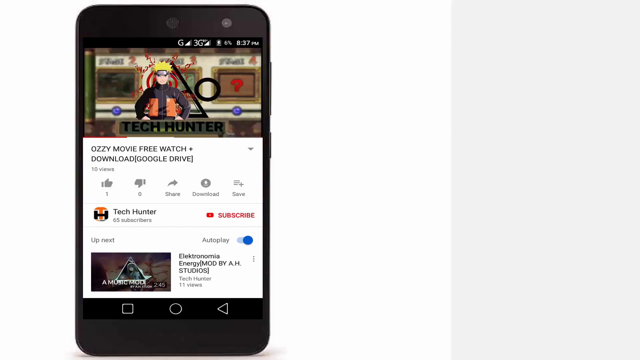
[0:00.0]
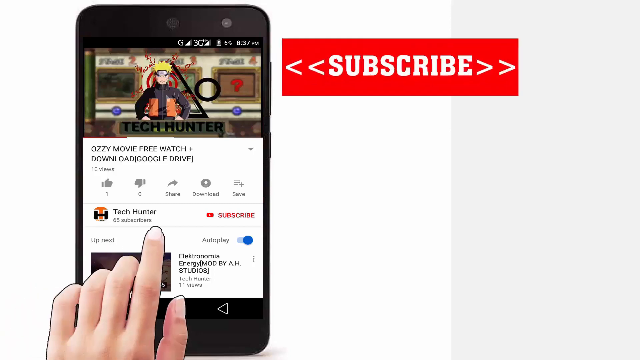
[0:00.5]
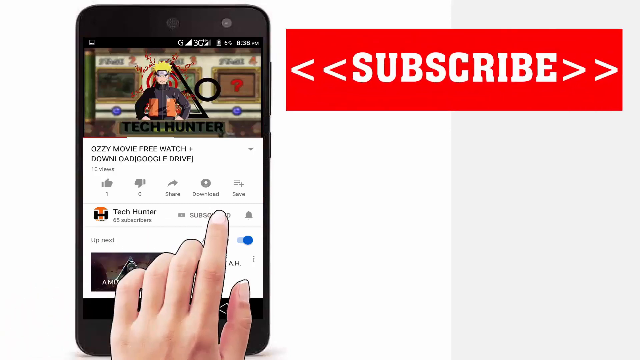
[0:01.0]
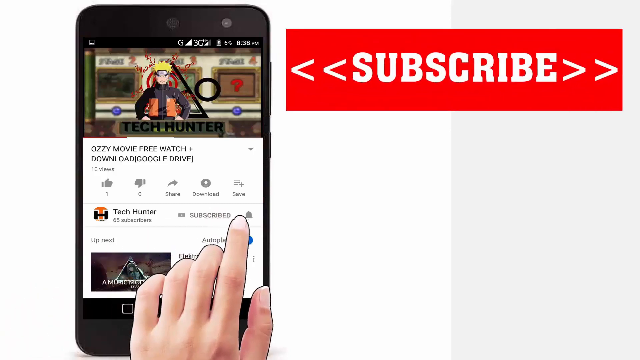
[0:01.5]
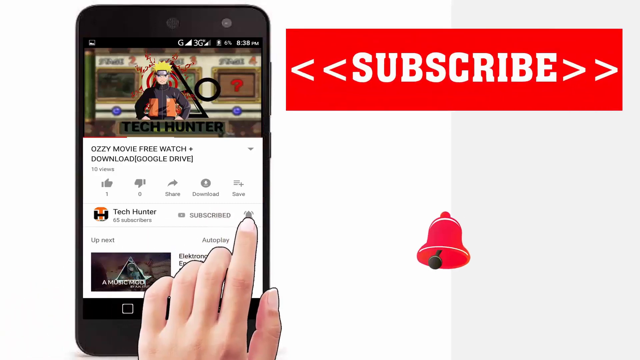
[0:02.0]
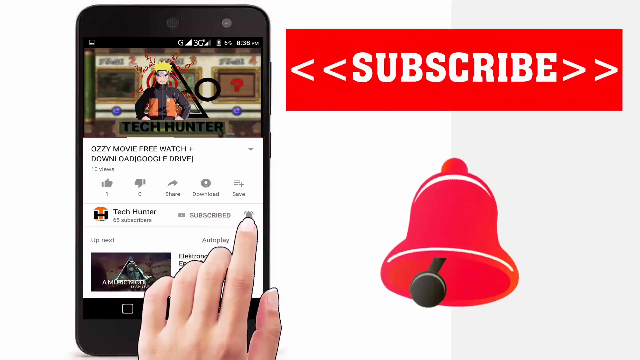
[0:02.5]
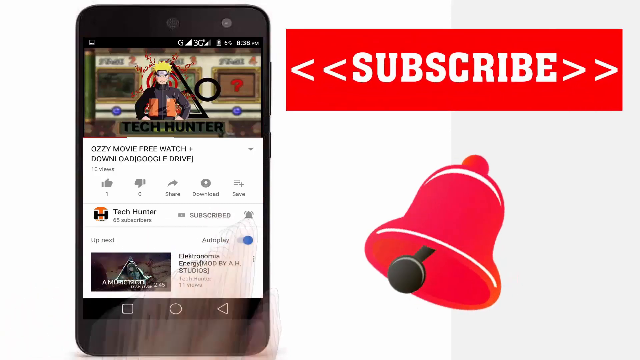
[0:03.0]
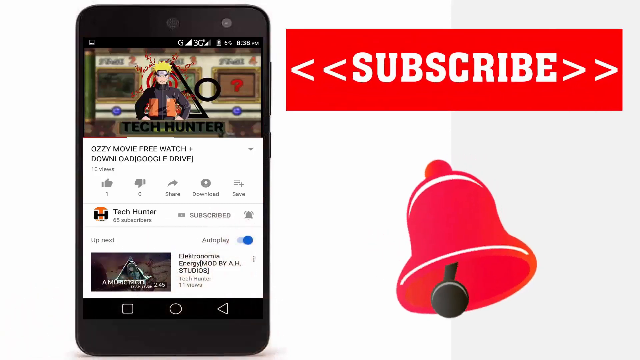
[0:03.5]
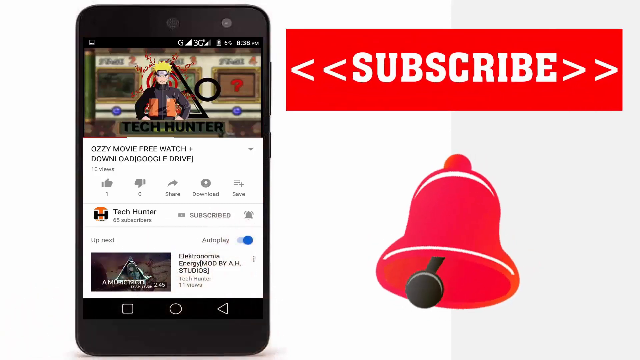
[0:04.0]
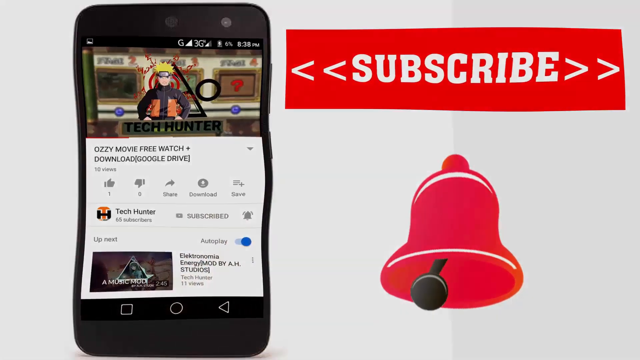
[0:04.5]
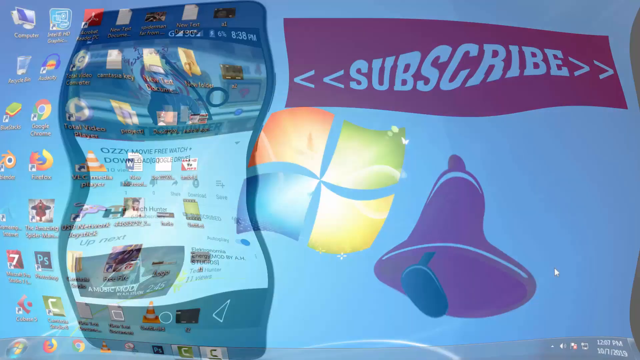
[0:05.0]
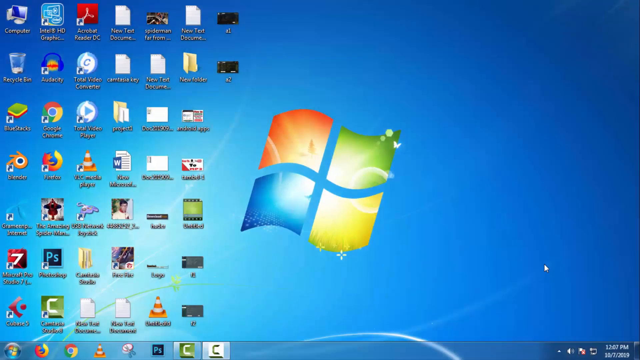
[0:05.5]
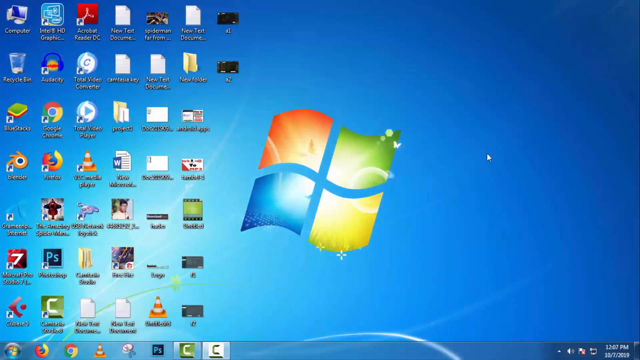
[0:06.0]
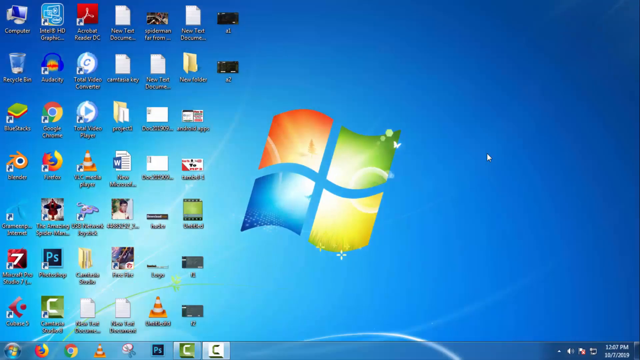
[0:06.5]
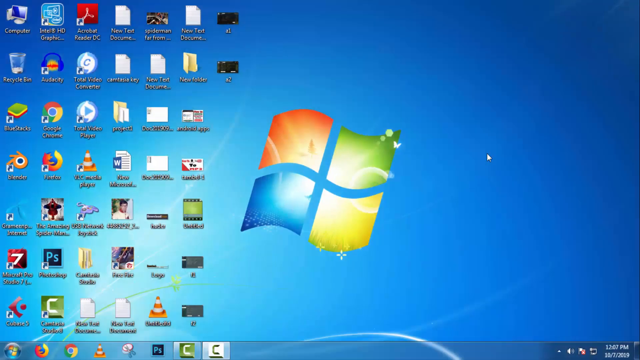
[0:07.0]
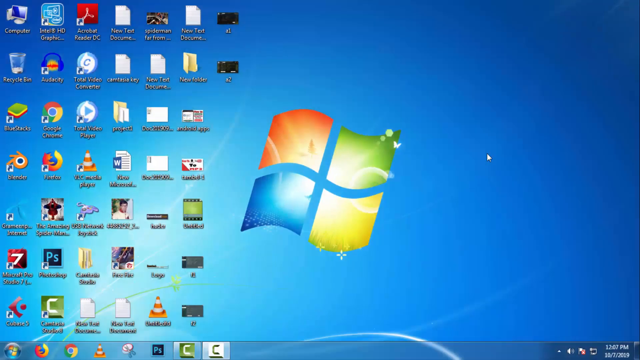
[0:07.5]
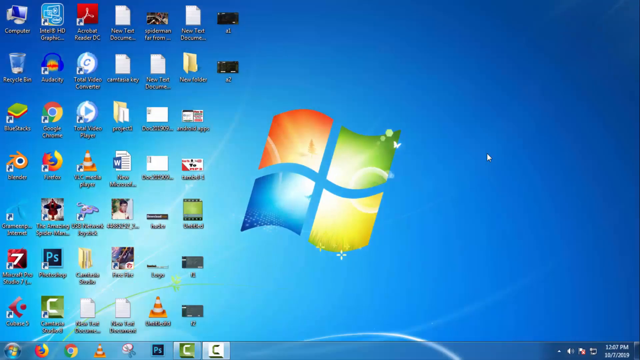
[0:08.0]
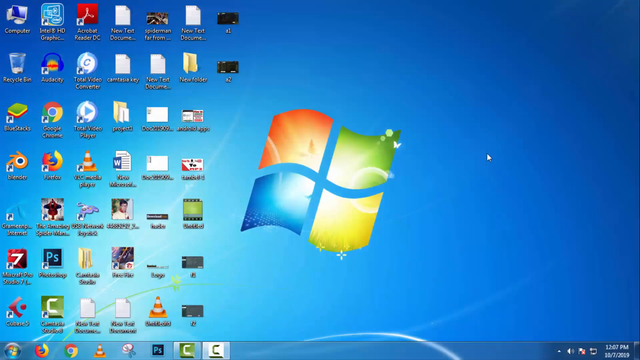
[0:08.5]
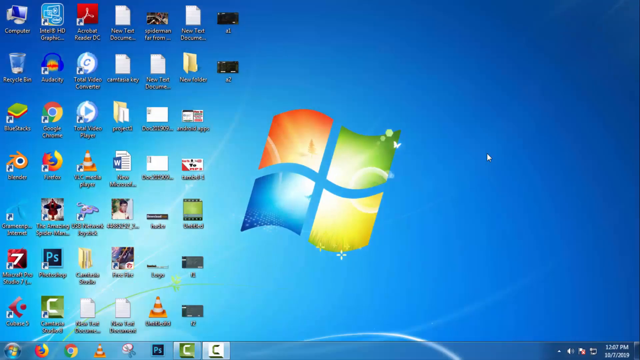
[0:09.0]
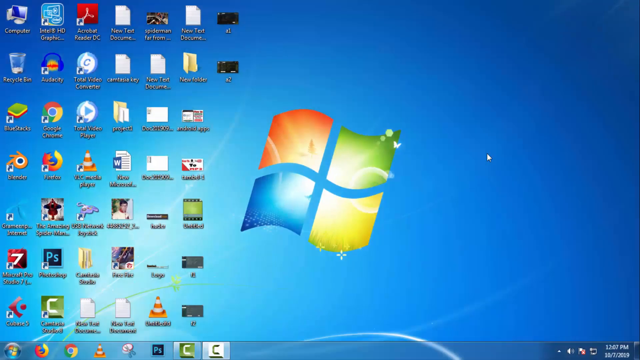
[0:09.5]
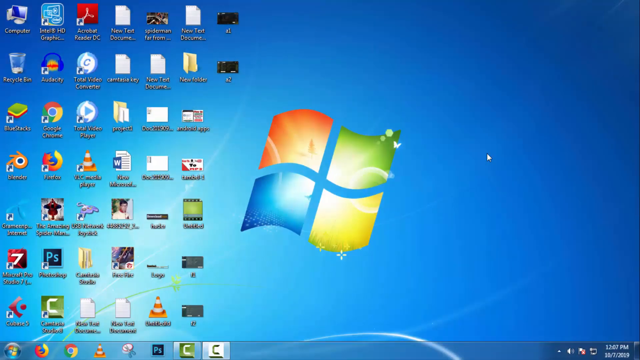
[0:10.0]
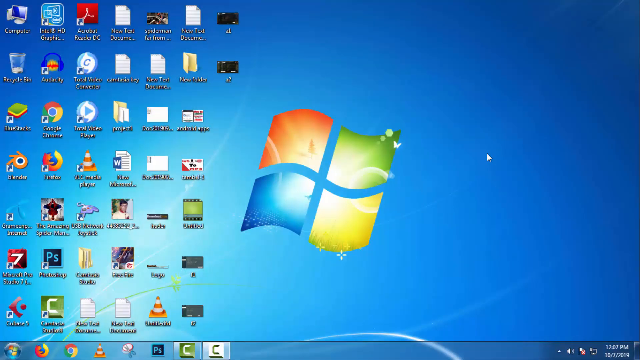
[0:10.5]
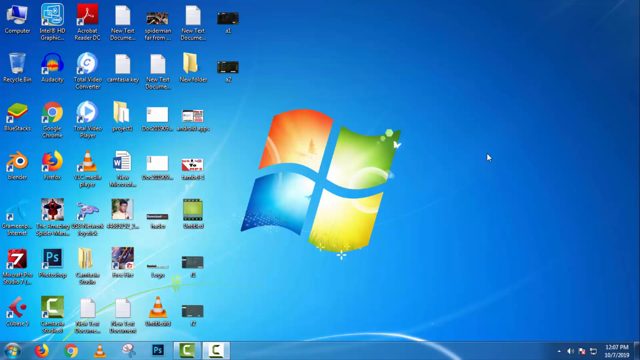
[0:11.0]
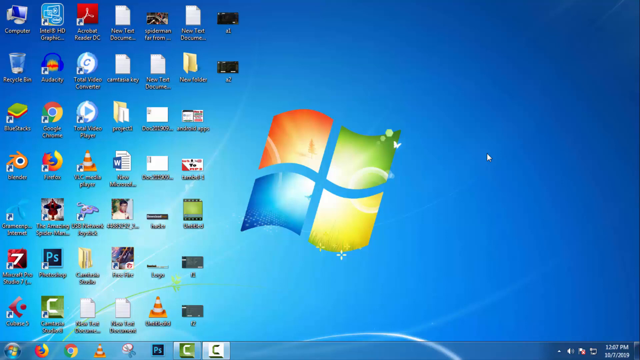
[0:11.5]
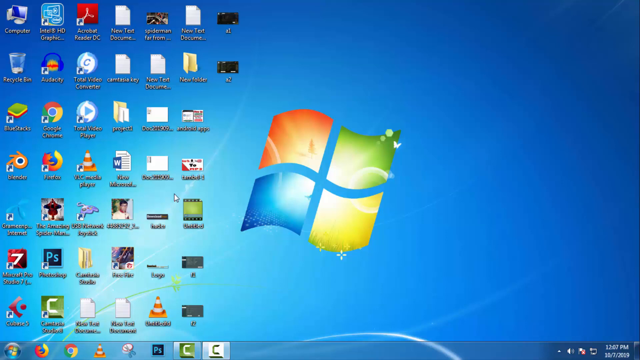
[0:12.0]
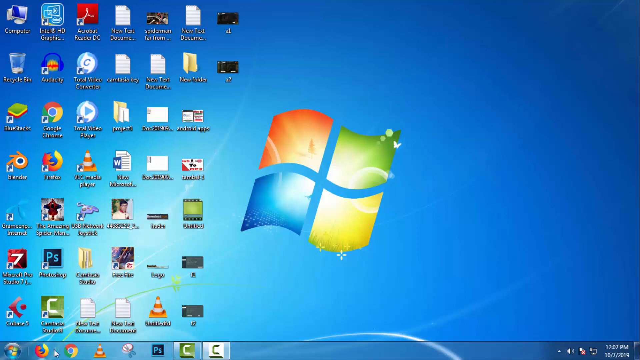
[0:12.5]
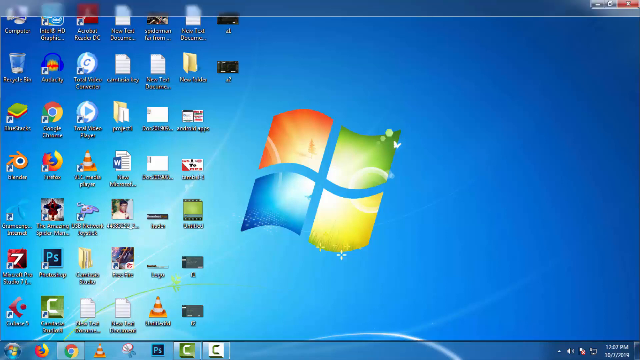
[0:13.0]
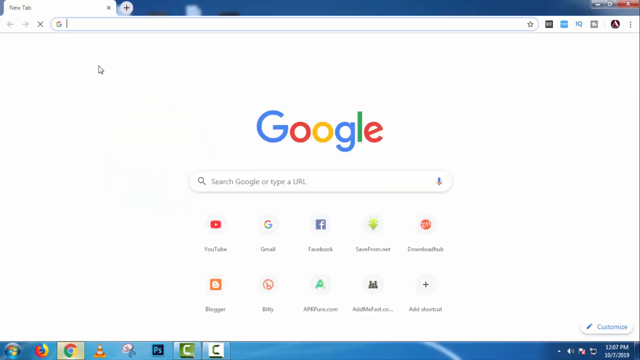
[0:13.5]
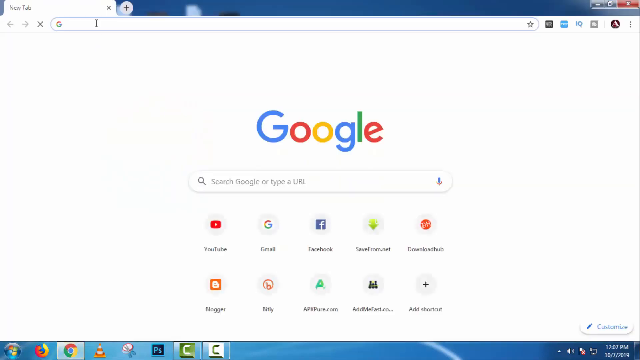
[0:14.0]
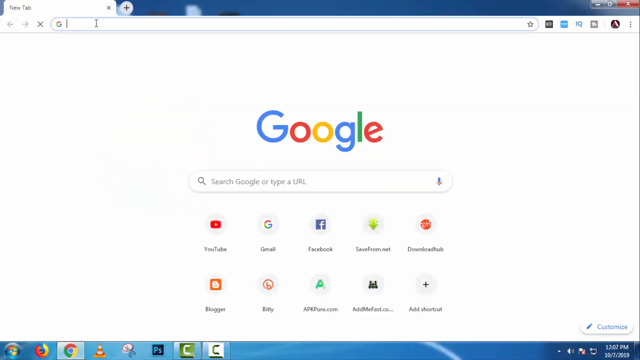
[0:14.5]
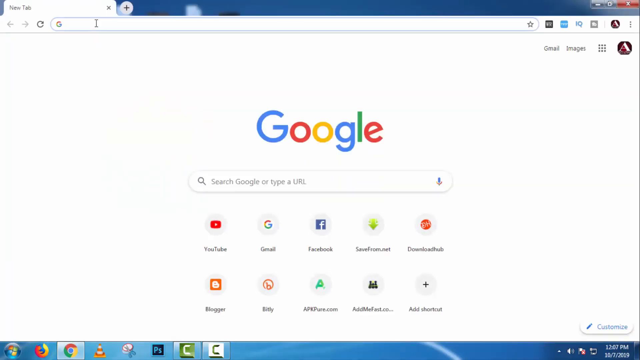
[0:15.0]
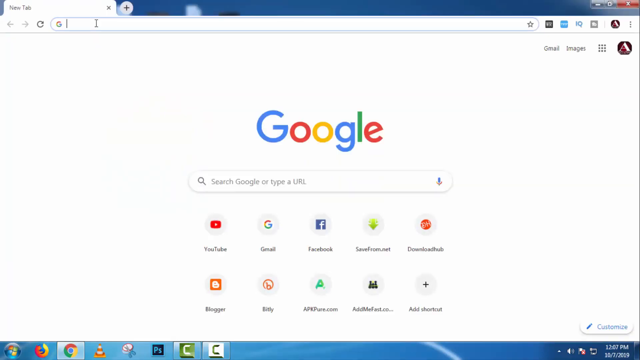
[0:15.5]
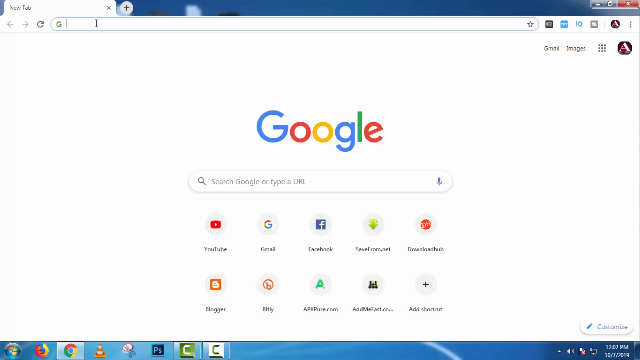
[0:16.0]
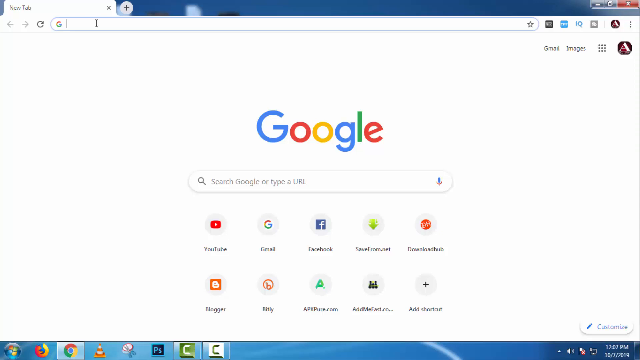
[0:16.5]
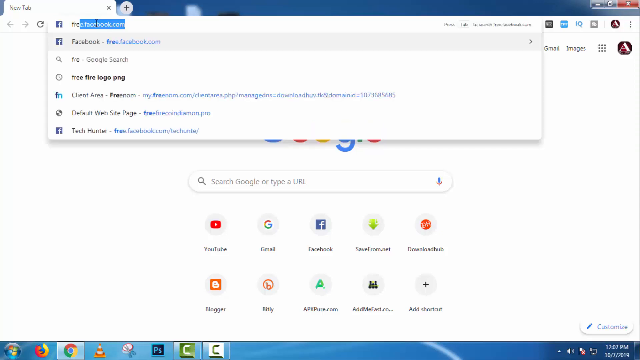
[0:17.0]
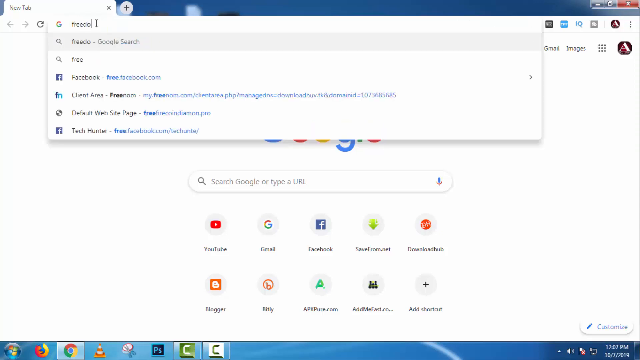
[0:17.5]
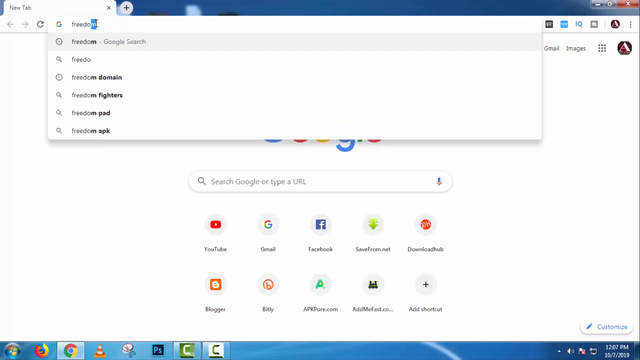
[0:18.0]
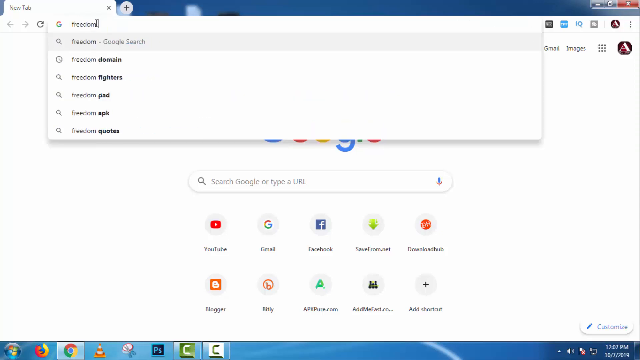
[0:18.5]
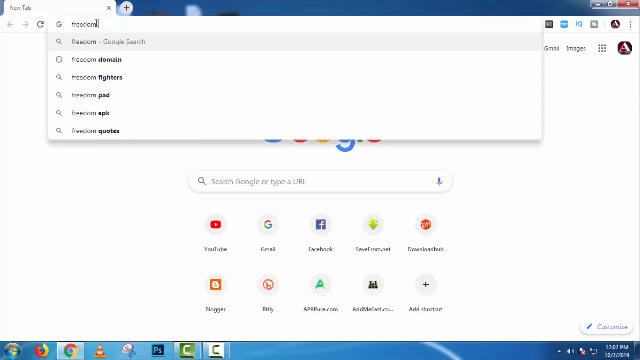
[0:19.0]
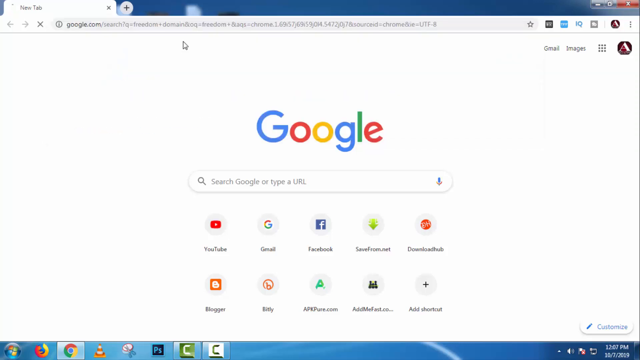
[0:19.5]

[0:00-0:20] A black iPhone appears on the left side of the screen. At the top of its screen is a small picture, taking up the top third, of a man standing in an orange and black shirt with his hands on his hip, wearing a kind of funky little yellow crown and glasses. Underneath it the text reads "Aussie movie, free watch and download, Google Drive," followed by some more text, another small picture and some little icons. A large red text box comes up in the upper right reading "subscribe" in white, all-caps serif letters, with two little white arrows on either side pointing out toward the ends of the box. A little cartoon hand comes up and touches the phone screen, apparently showing how to subscribe; it touches the little bell icon, and a large red cartoon bell pops up underneath "subscribe" and kind of moves back and forth. The view switches to a Windows interface: the large four-colored Windows icon in the middle of a blue screen, with lots of typical computer icons, maybe eight rows of six or seven across. Then another view of the computer appears, seemingly as if sitting in front of someone's computer screen, and the Google search screen pops up with the multicolored Google logo, the search box underneath it, and a couple of rows of icons.